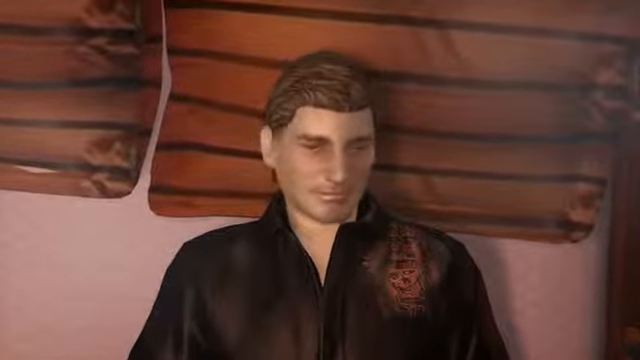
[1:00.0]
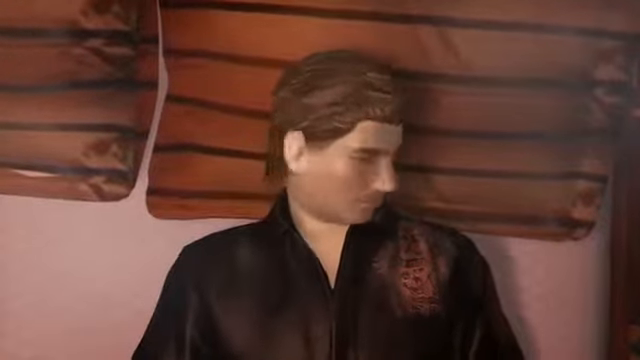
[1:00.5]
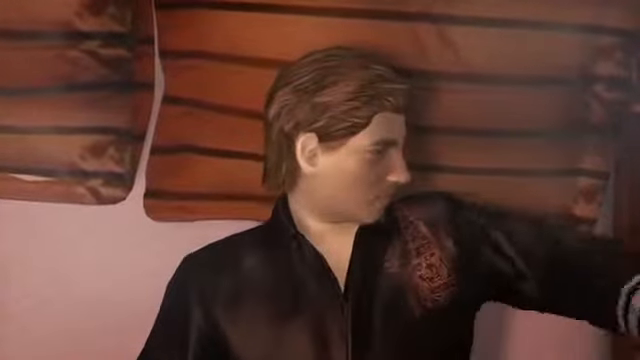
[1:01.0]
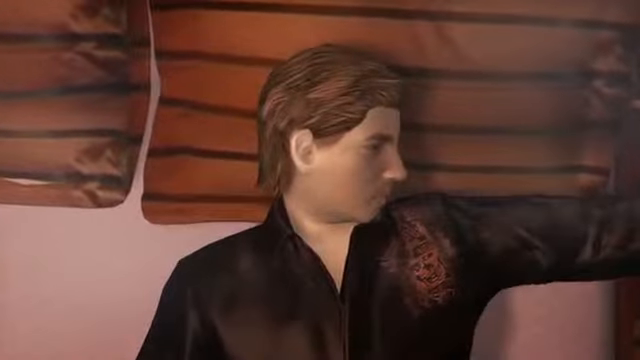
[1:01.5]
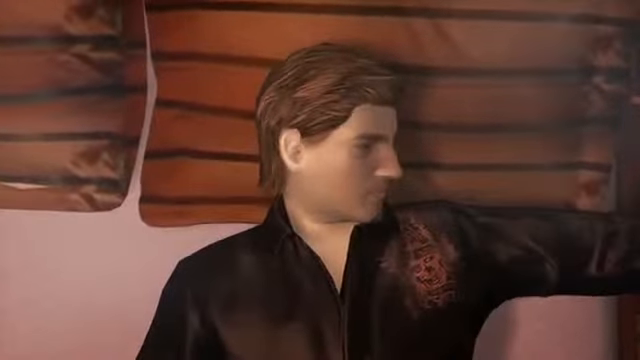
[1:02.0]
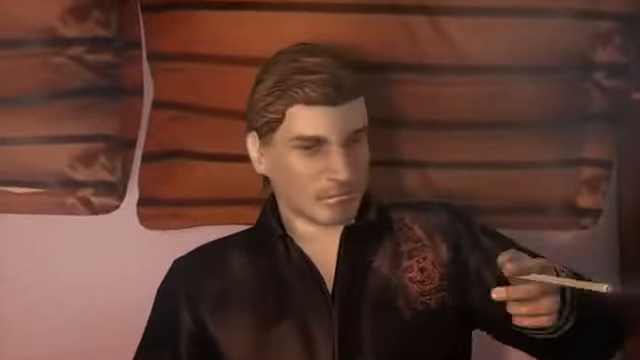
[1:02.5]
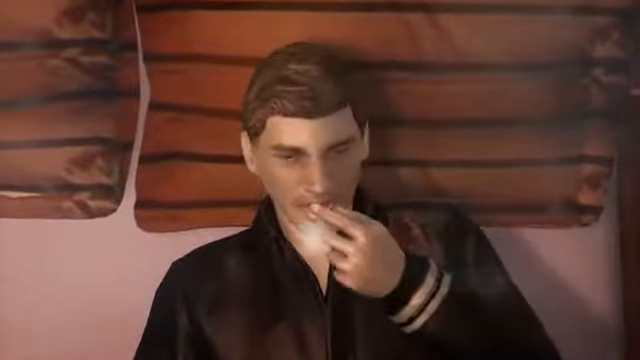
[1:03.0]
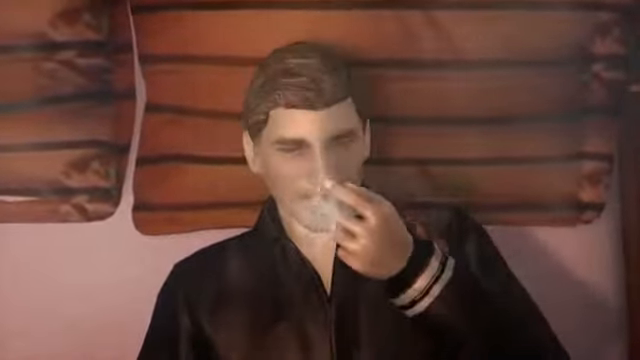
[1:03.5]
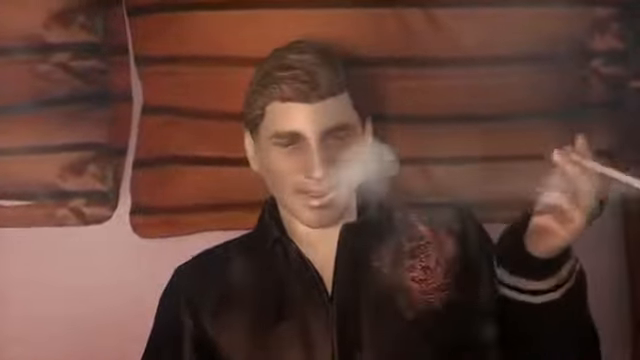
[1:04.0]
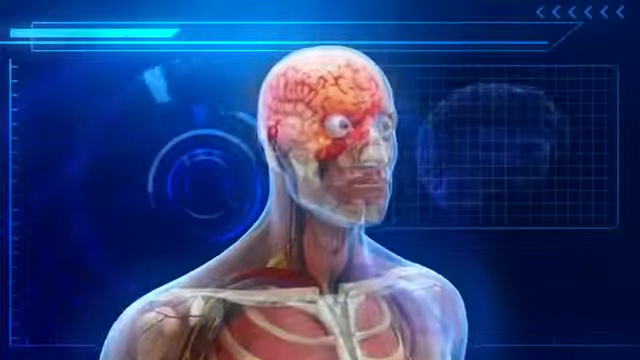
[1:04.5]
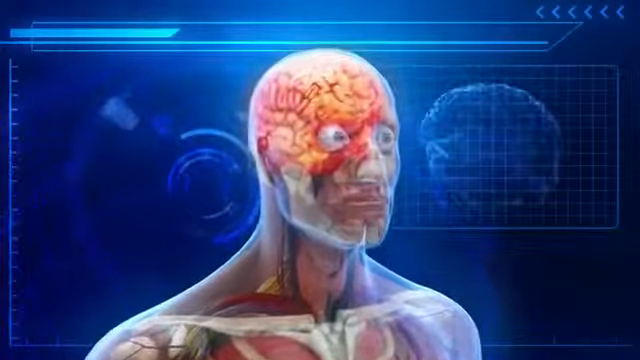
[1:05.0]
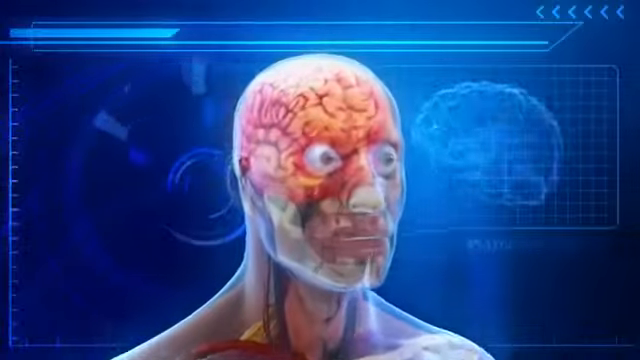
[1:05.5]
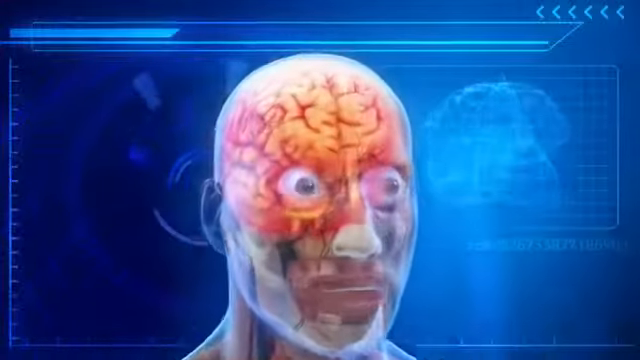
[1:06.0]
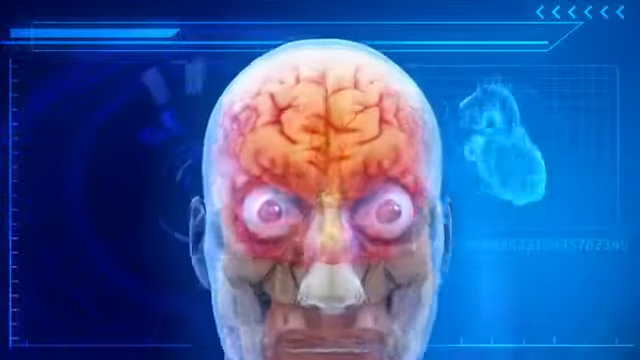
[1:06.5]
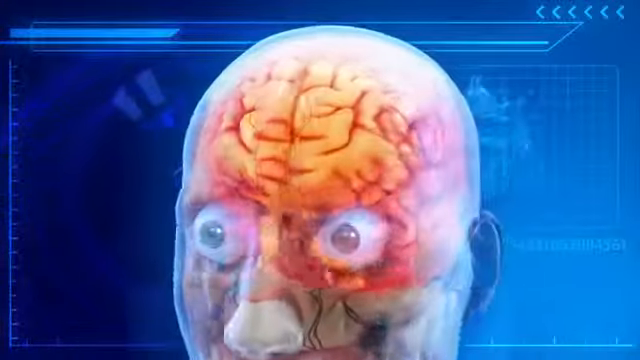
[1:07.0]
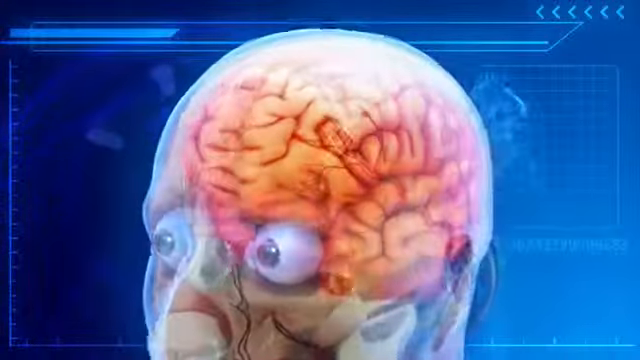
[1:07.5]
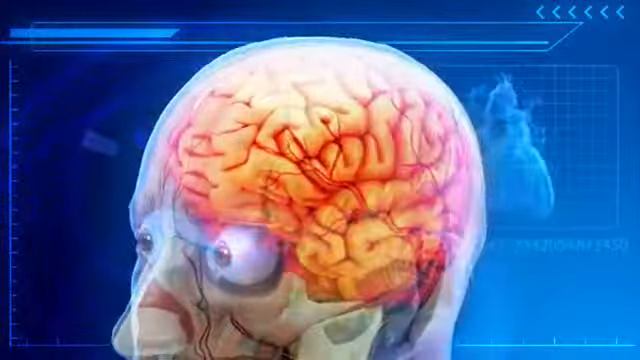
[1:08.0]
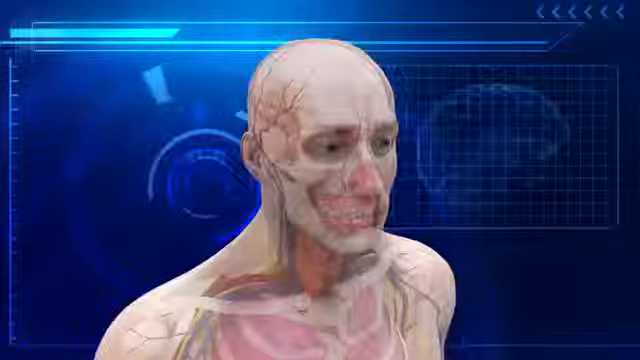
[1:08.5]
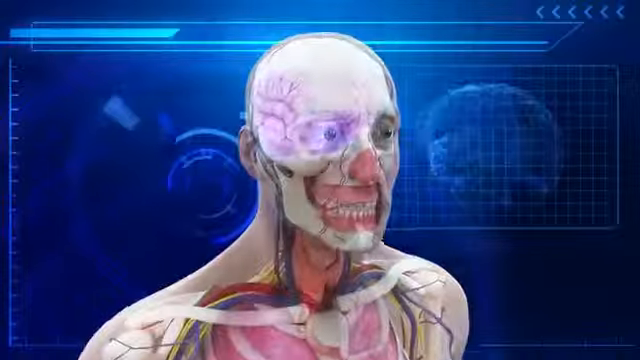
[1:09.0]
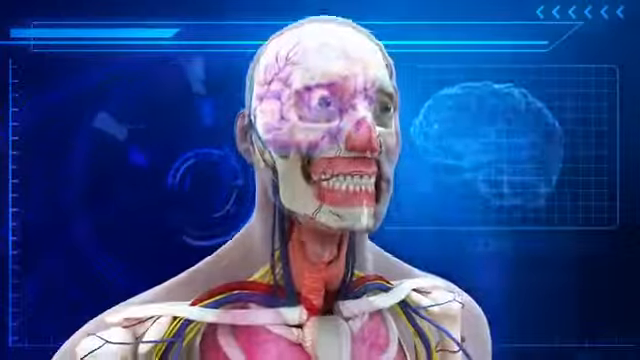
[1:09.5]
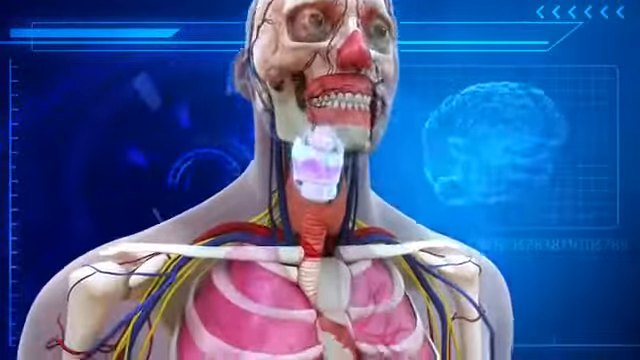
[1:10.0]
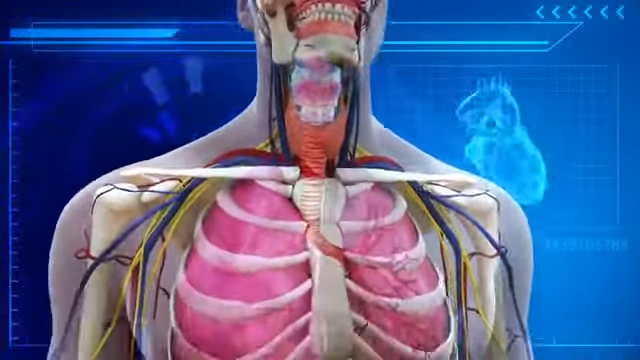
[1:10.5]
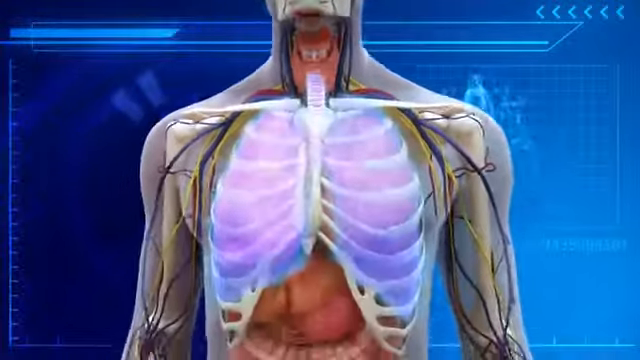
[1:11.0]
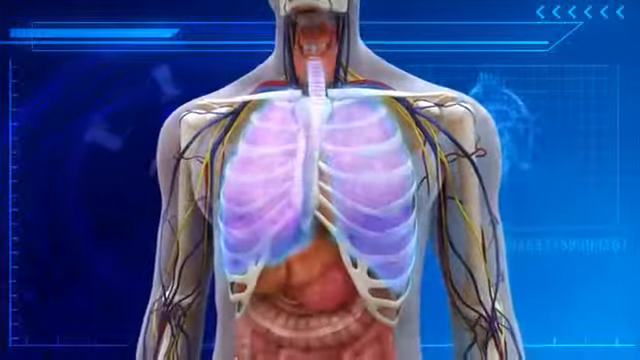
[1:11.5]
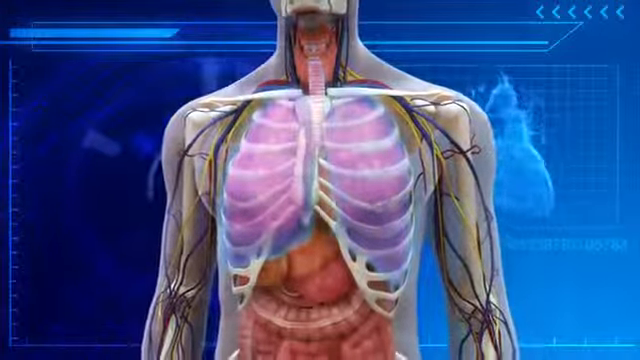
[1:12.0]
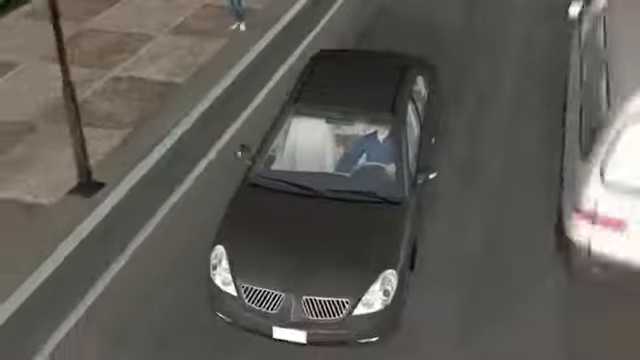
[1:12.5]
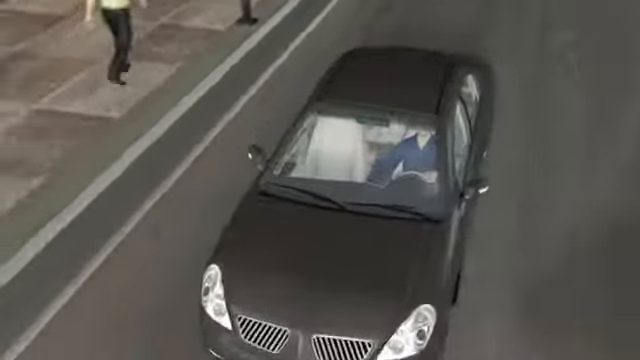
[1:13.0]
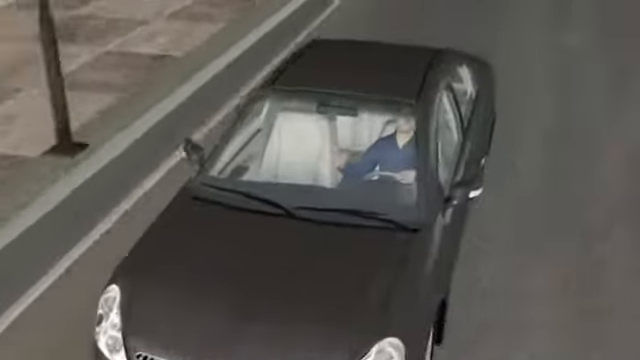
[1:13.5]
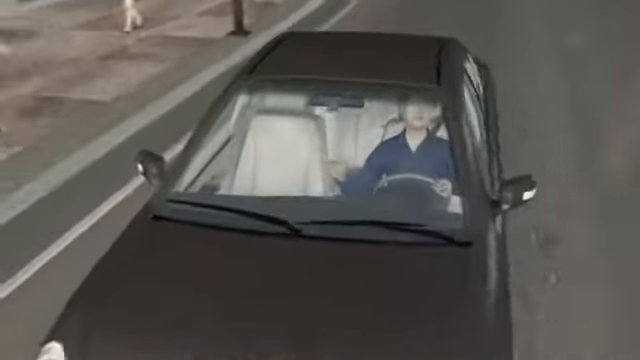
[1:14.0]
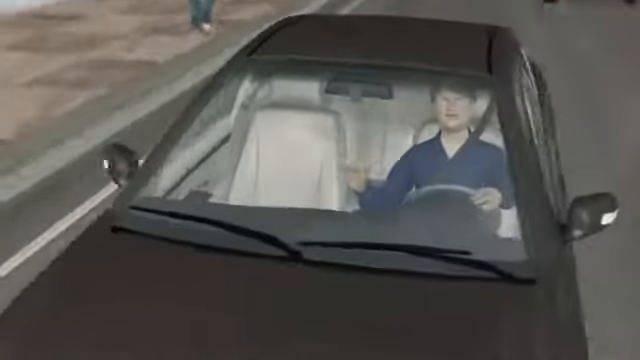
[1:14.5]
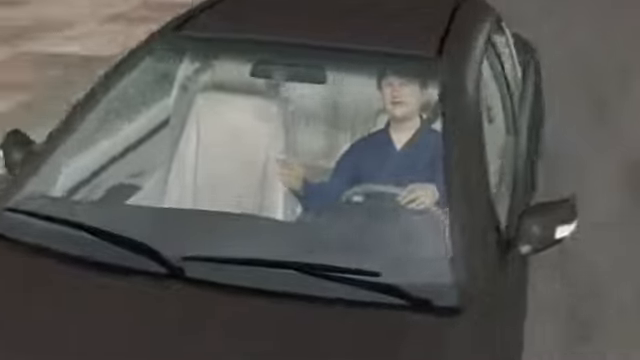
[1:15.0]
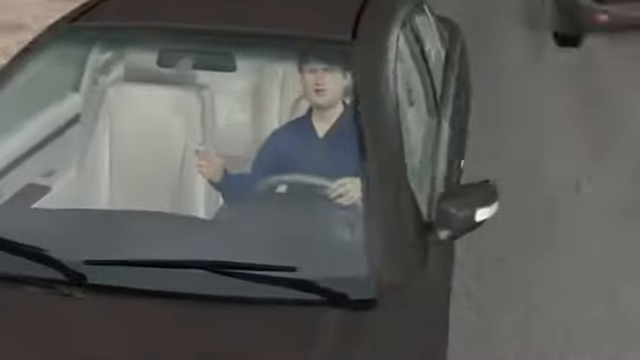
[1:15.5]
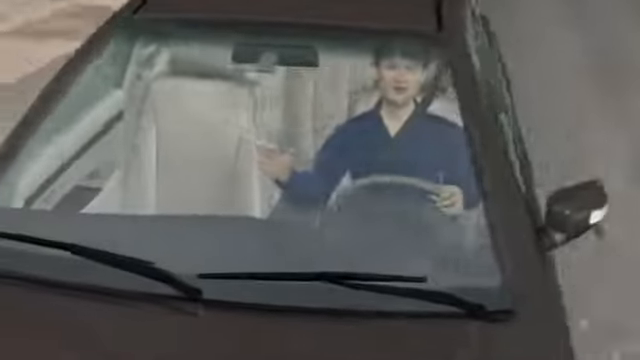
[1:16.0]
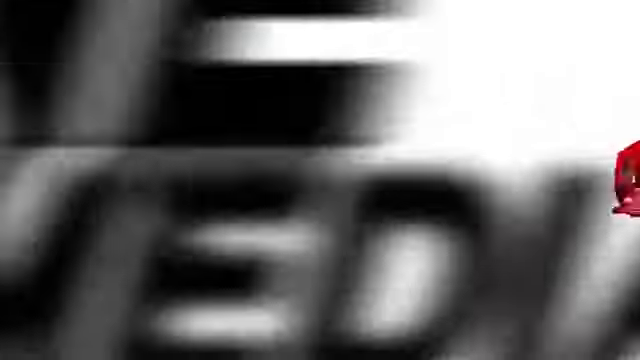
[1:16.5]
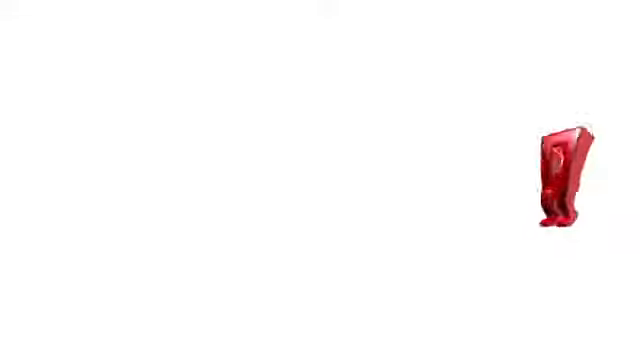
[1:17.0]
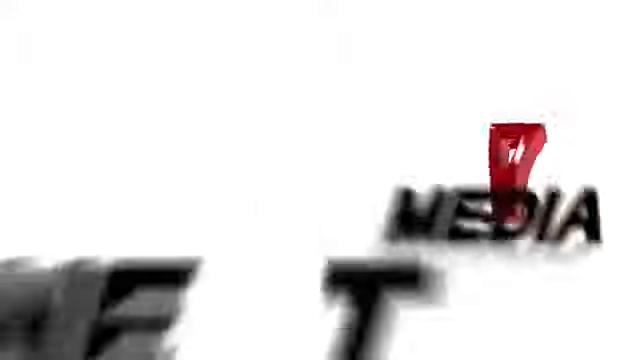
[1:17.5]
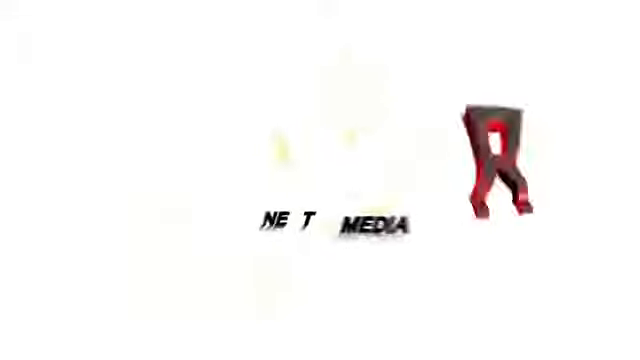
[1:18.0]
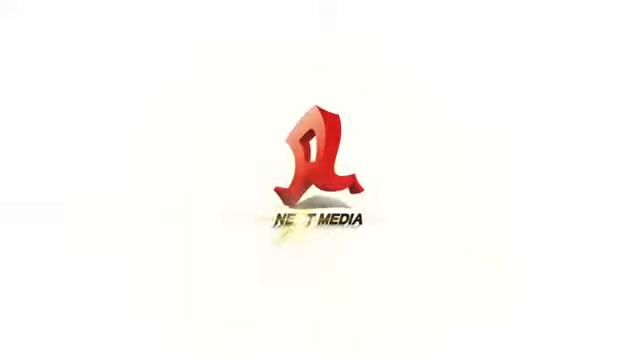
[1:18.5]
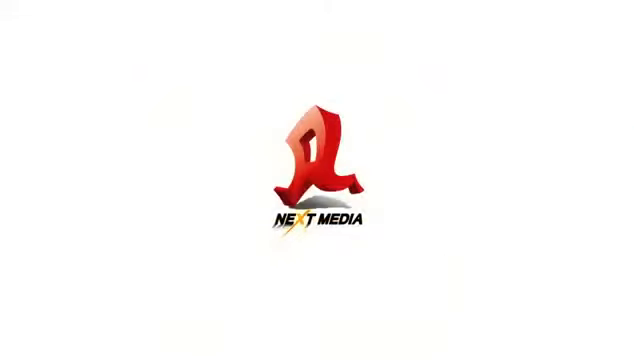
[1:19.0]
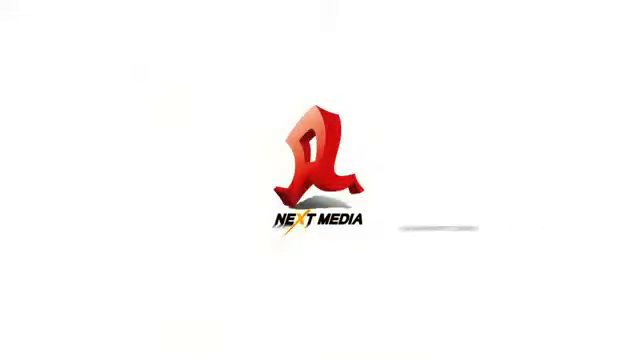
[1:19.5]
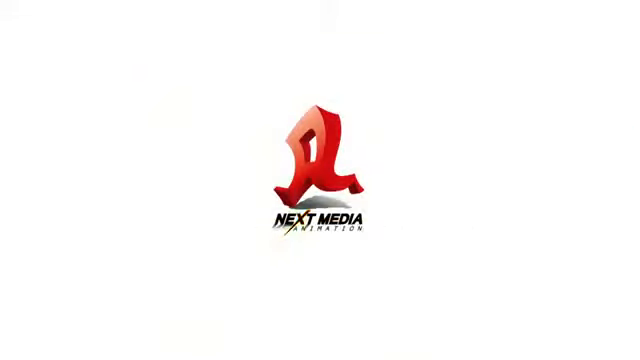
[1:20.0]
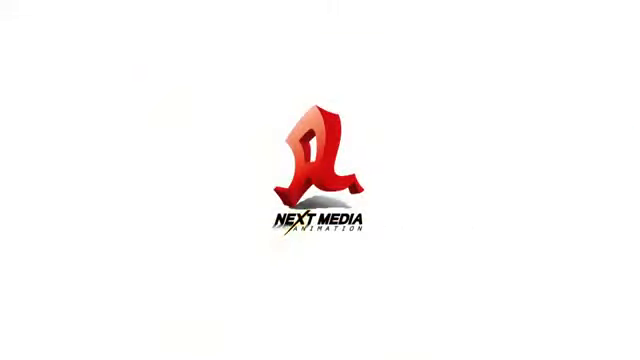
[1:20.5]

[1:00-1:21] Another CGI-style animated clip shows an overhead shot of what looks like a man in bed wearing some kind of shirt. He appears to be tossing and turning, then turns toward the right side of the screen, reaching his left arm out toward something while looking in that direction. He pulls what looks like a cigarette to his mouth, holding it with his left hand, takes a drag, and smoke comes out. The scene cuts to the see-through human skeleton, where the brain pulses in different colors, going red and orange. Another view of the skeleton follows, this time showing just the bone of the skull without much visible inside it; the upper throat area is highlighted, then the view moves down to the lungs, which are highlighted. Finally, animated footage shows someone driving a black car, seemingly quite wildly from left to right, holding what looks like a cigarette in their right hand and steering with the left.